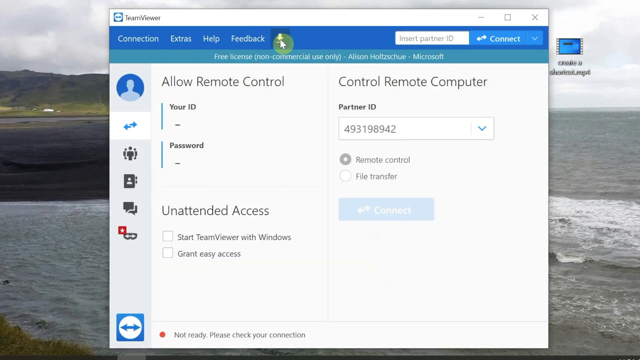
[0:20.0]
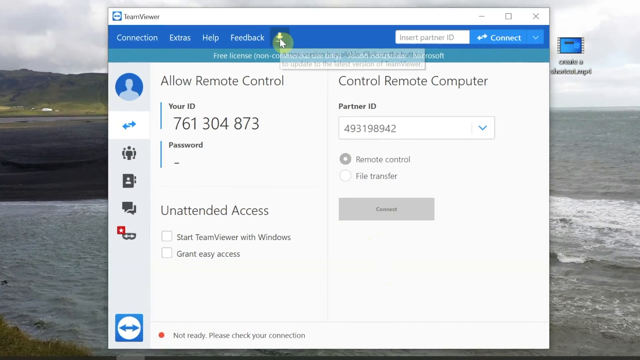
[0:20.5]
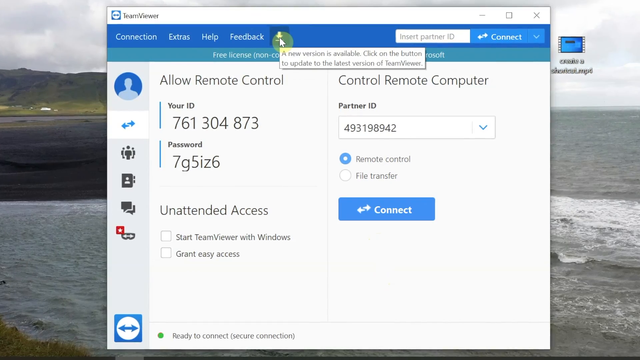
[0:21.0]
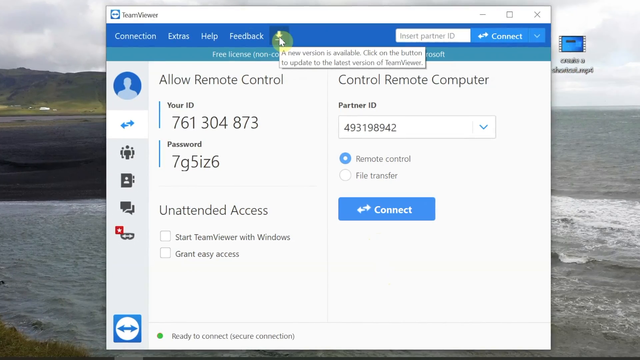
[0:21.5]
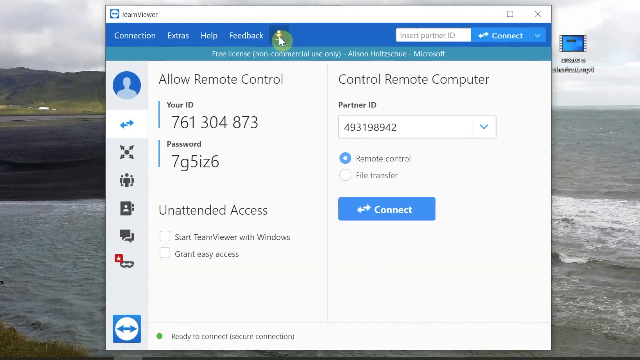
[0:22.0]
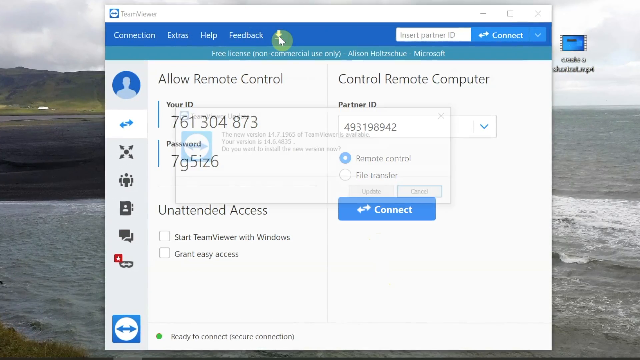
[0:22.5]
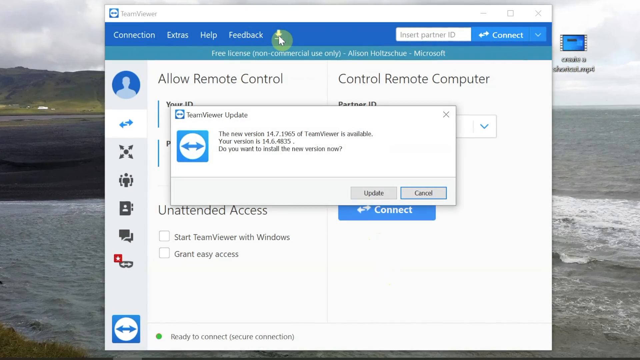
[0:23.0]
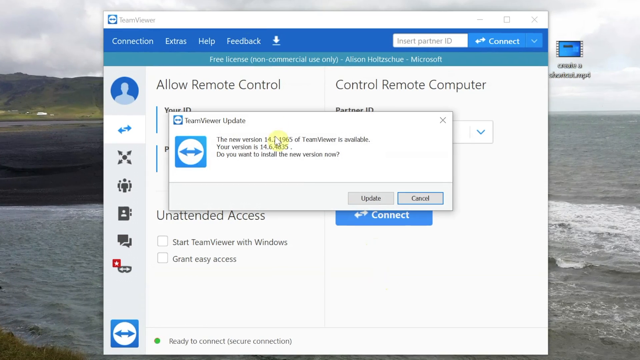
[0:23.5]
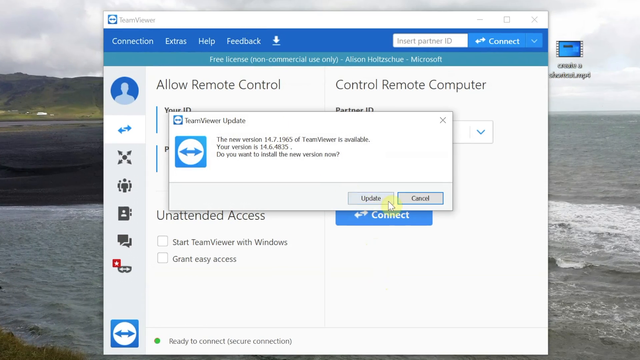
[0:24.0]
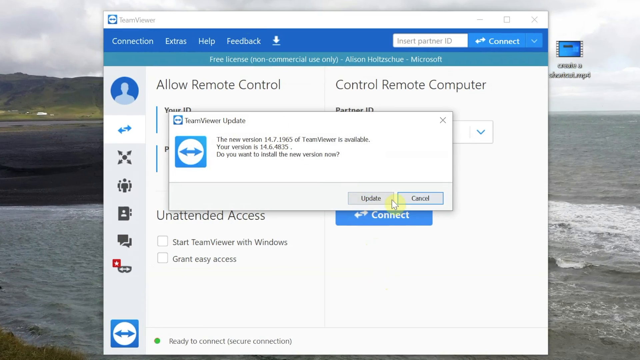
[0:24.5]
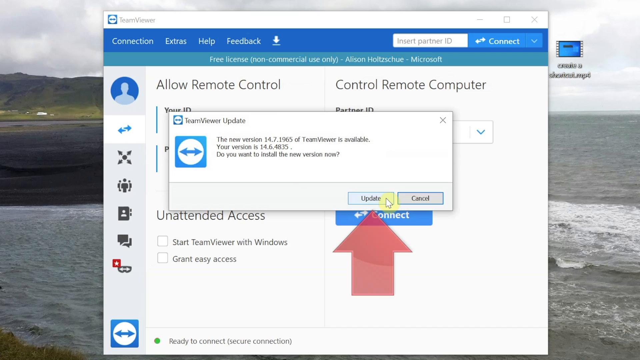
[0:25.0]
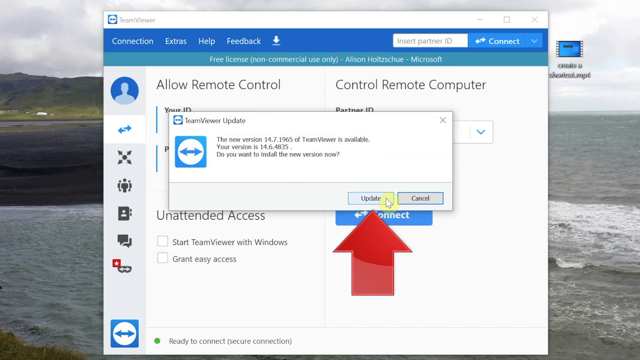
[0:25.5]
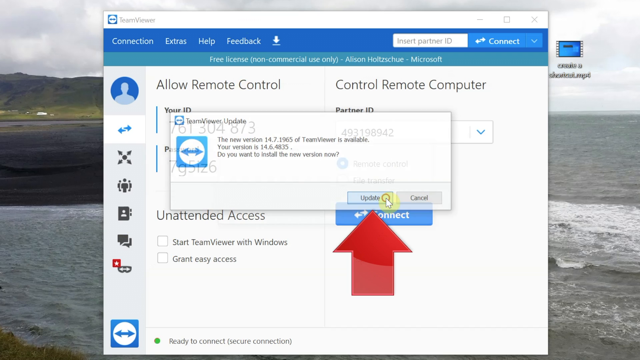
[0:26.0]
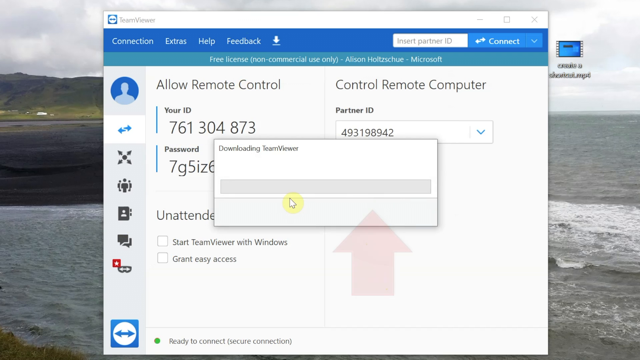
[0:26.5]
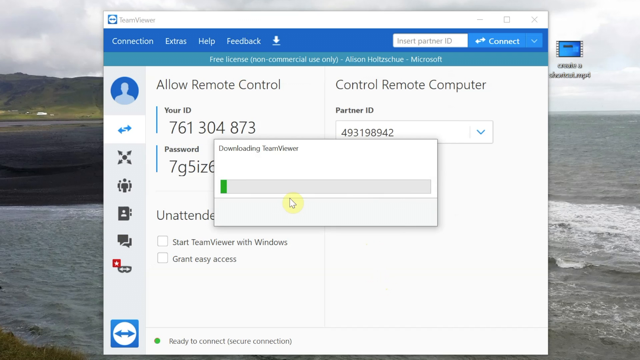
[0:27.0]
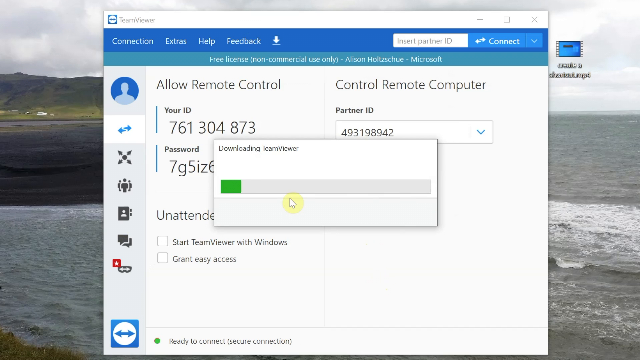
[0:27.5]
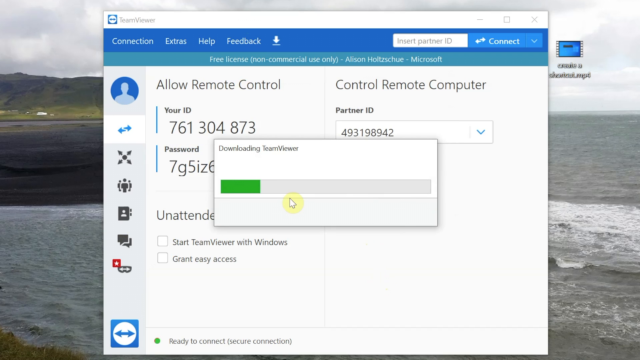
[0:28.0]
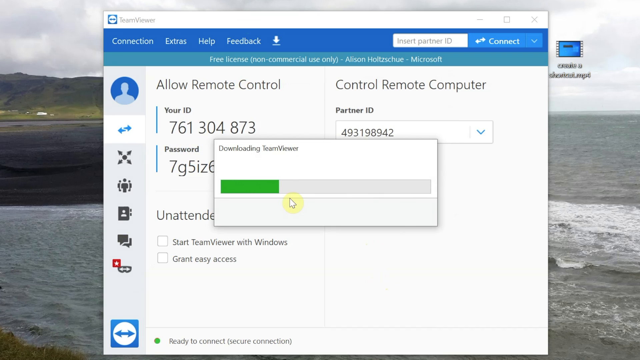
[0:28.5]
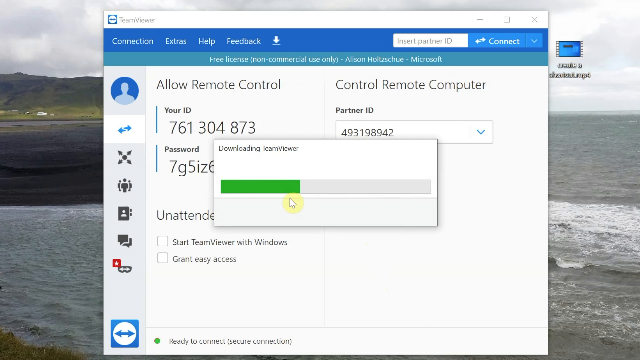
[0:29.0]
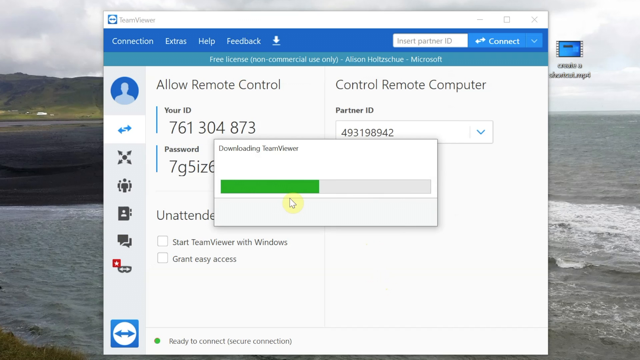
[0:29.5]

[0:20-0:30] Several options appear on the screen. On the left side it says "allow remote control" with your ID and password; on the right side it says "control remote computer" with a partner ID. A pop-up window then shows up with the version: it is a TeamViewer update. The cursor moves over the update box as a large red arrow points at it. They click on update, and a status window with a green bar appears; the green bar moves.